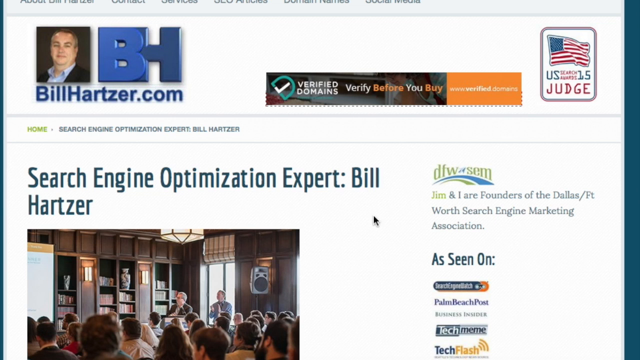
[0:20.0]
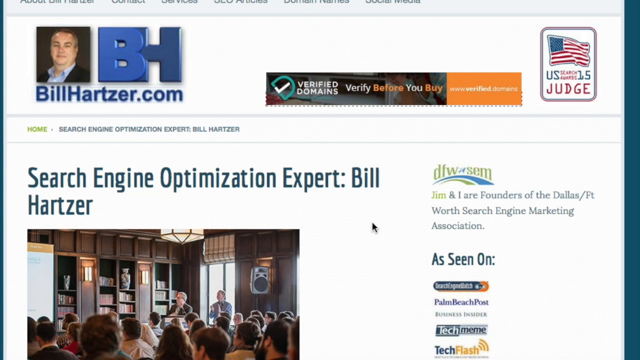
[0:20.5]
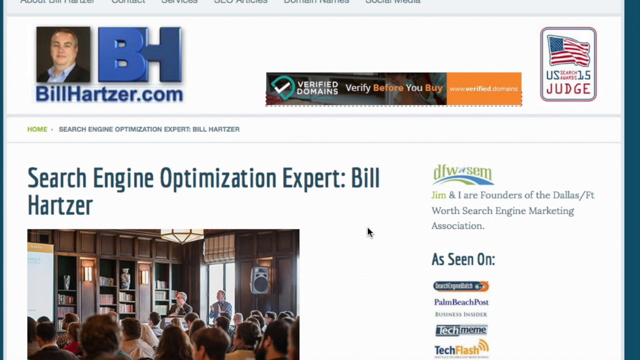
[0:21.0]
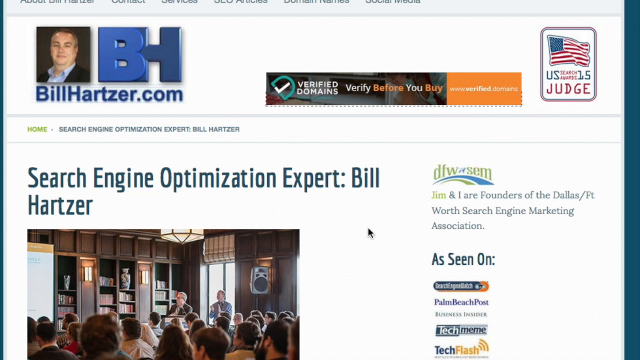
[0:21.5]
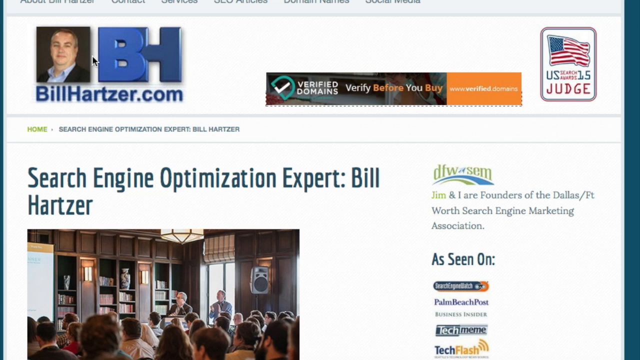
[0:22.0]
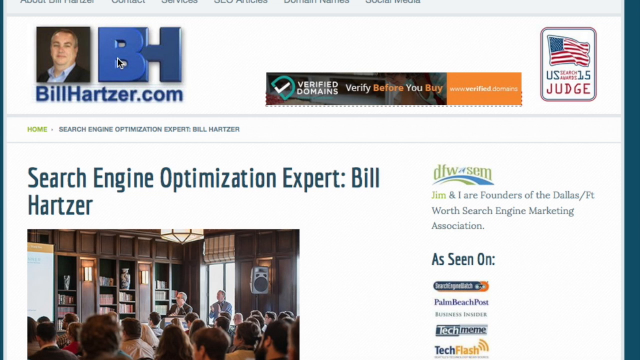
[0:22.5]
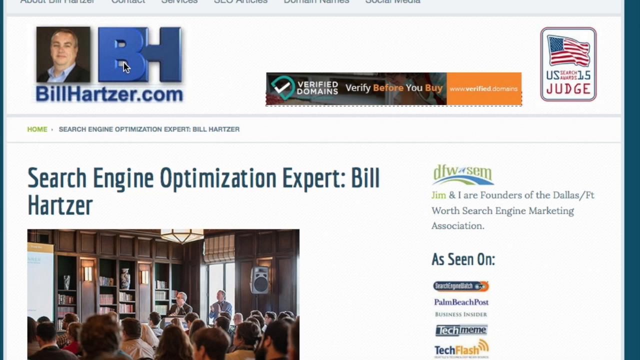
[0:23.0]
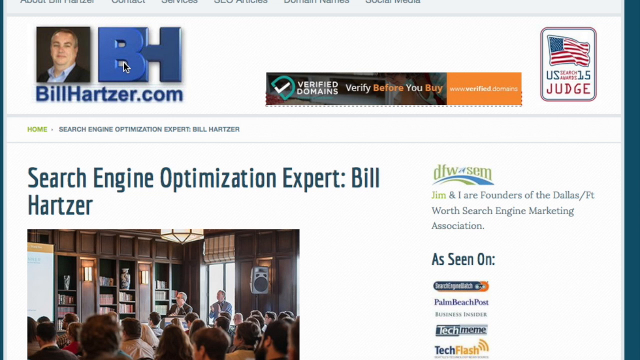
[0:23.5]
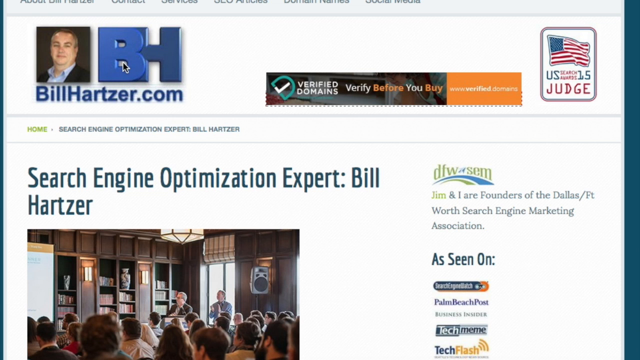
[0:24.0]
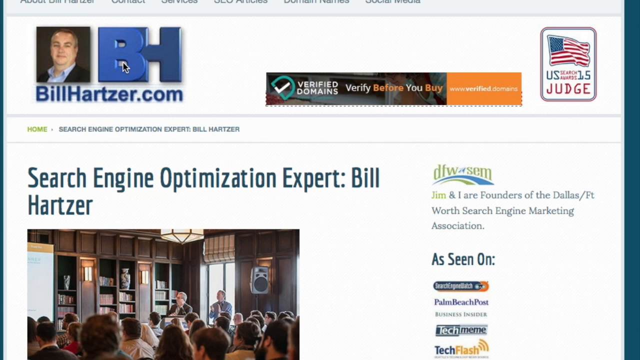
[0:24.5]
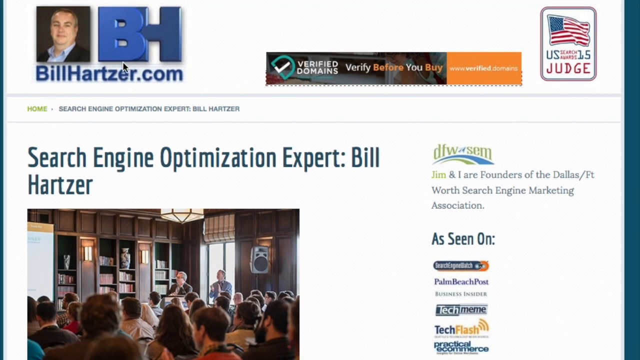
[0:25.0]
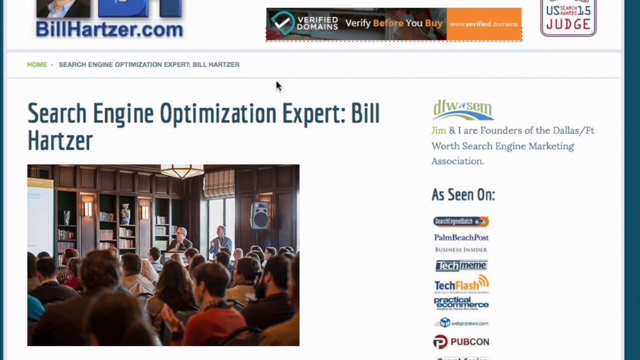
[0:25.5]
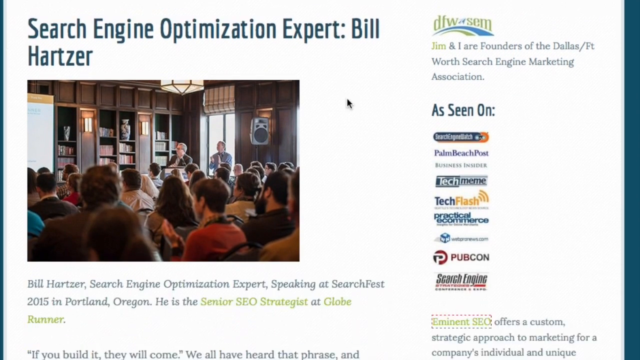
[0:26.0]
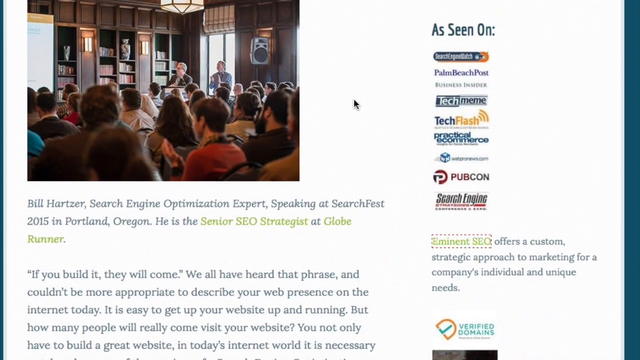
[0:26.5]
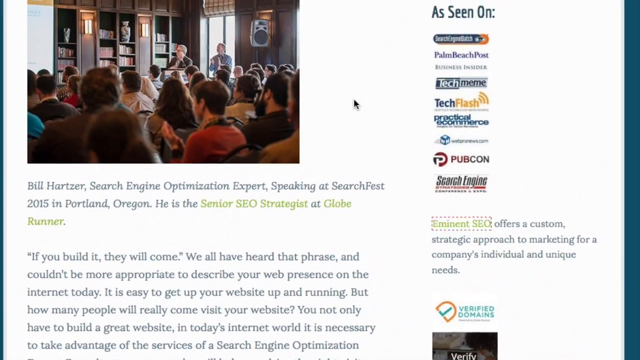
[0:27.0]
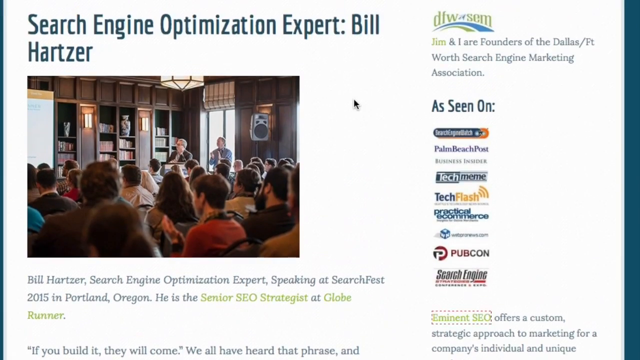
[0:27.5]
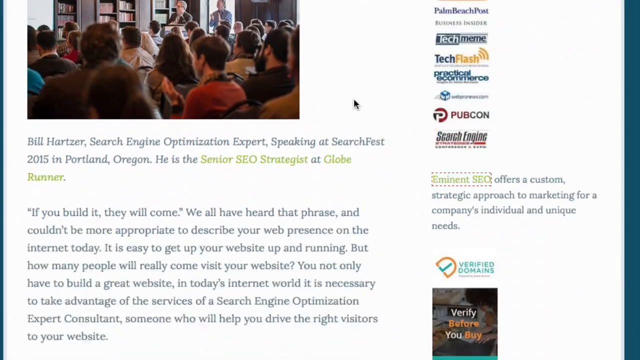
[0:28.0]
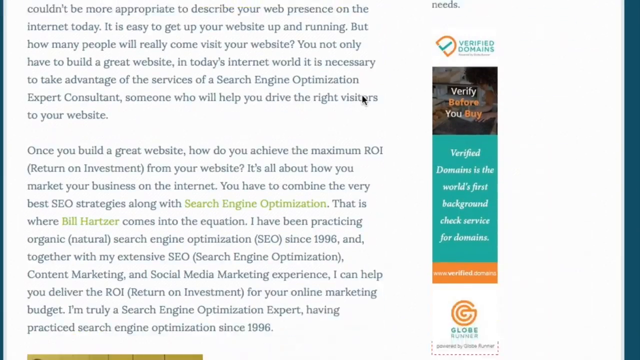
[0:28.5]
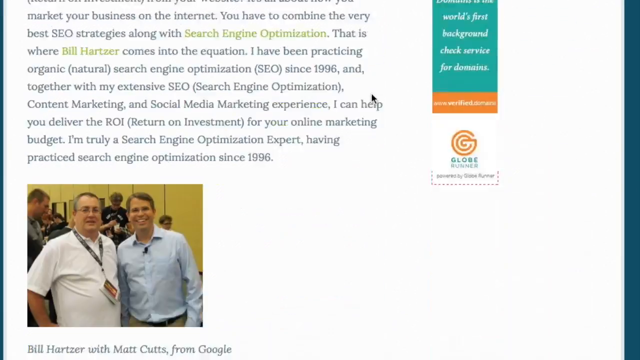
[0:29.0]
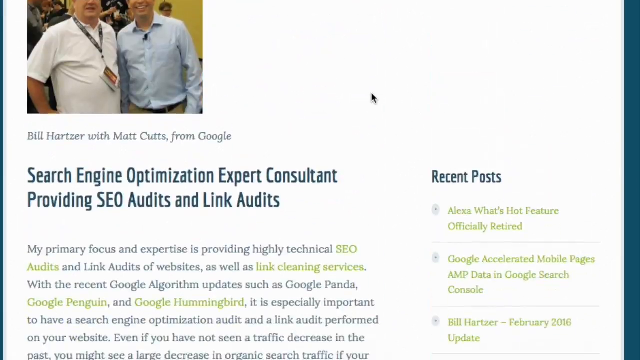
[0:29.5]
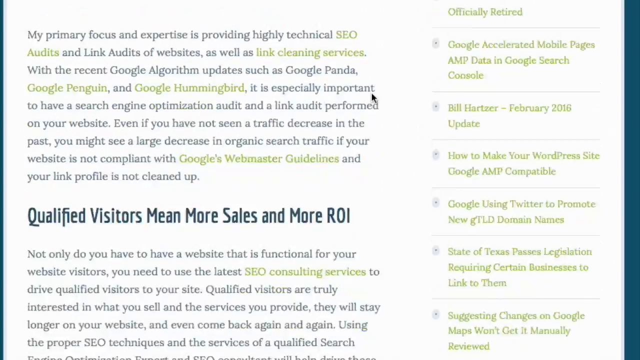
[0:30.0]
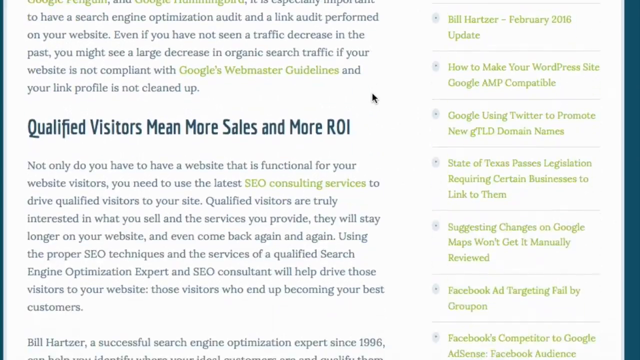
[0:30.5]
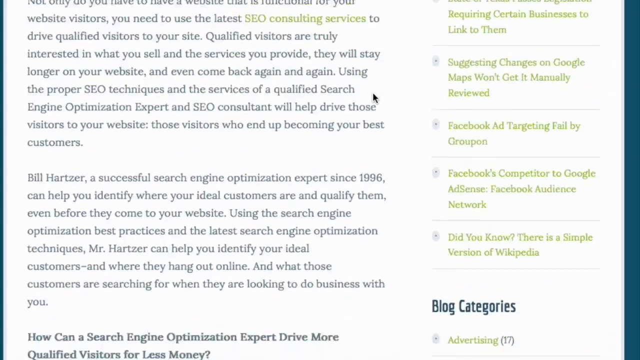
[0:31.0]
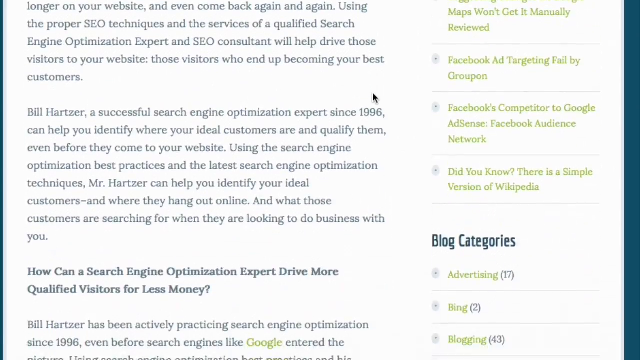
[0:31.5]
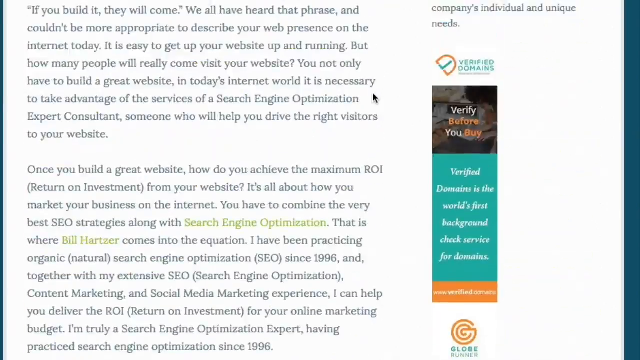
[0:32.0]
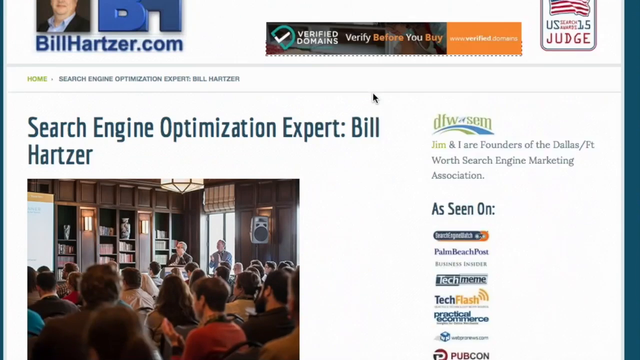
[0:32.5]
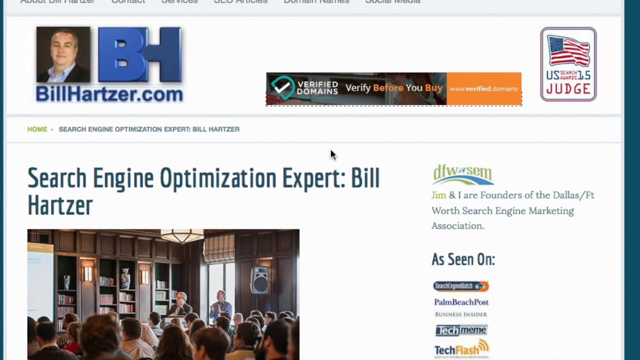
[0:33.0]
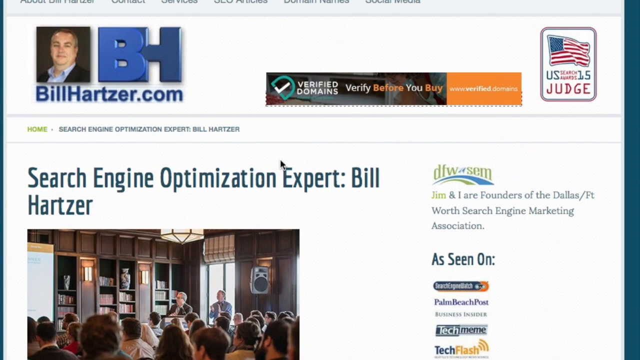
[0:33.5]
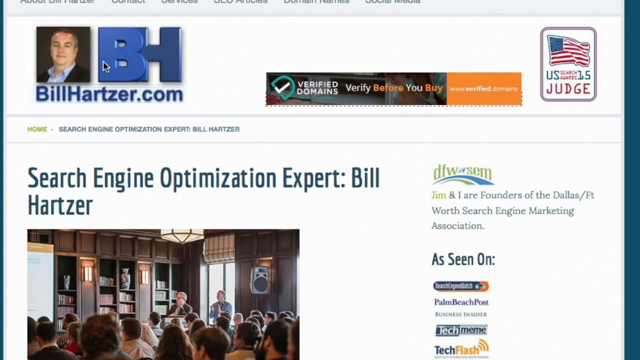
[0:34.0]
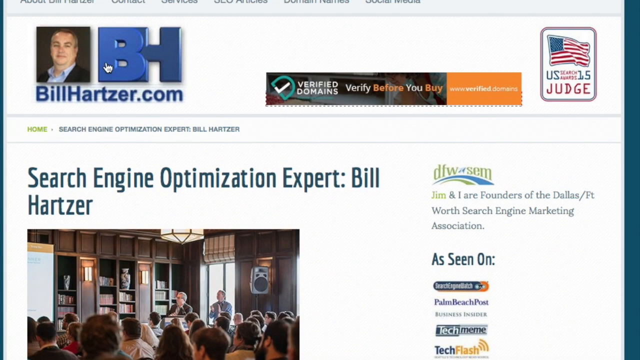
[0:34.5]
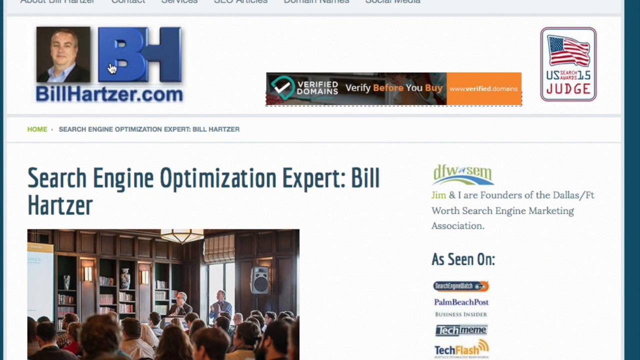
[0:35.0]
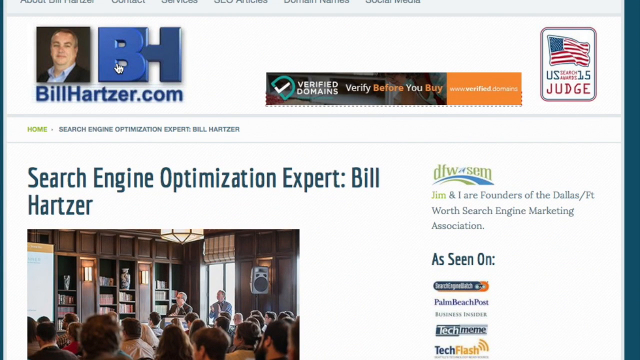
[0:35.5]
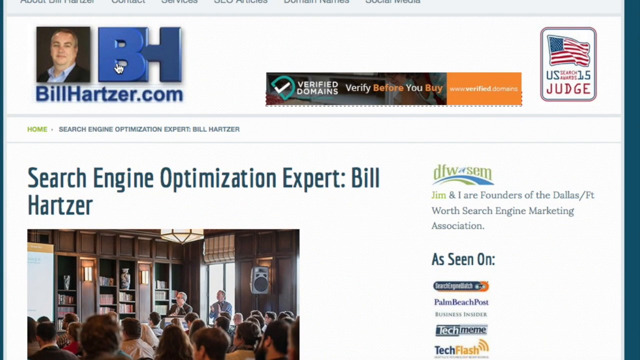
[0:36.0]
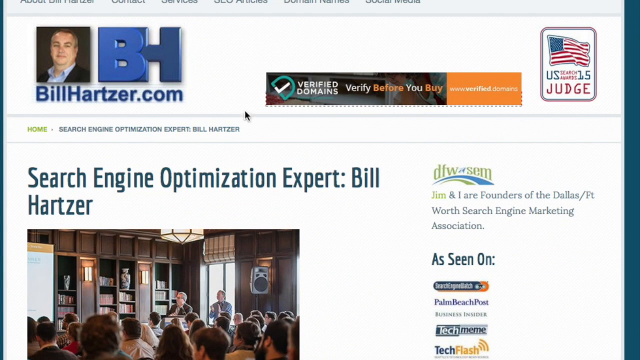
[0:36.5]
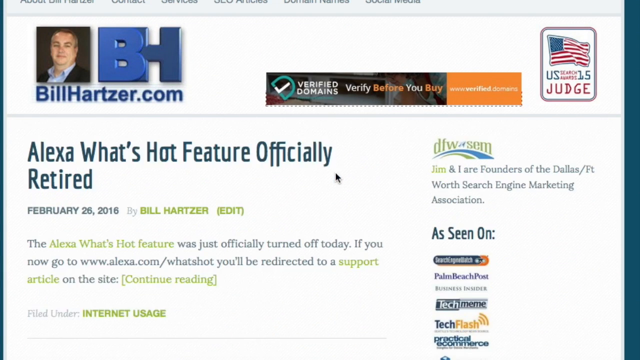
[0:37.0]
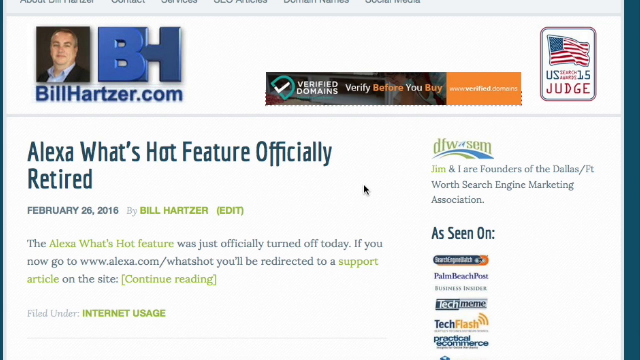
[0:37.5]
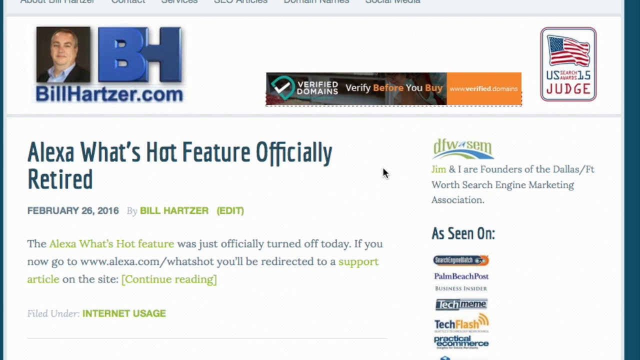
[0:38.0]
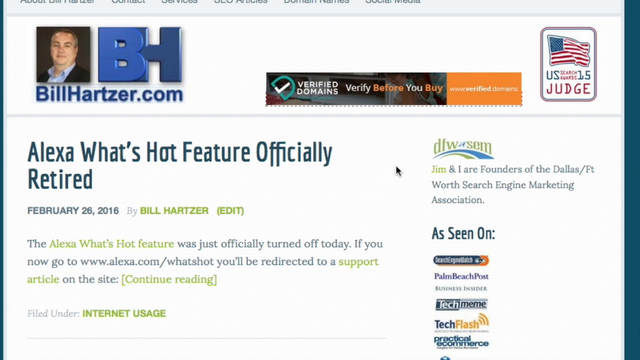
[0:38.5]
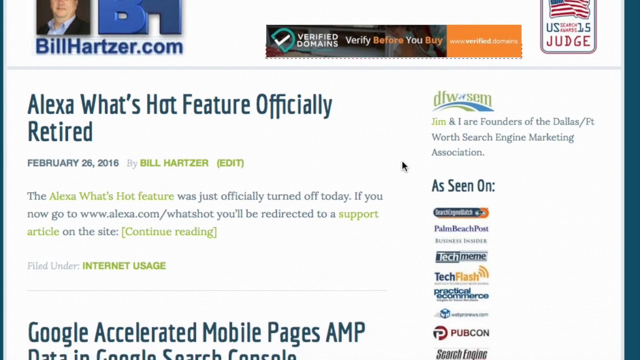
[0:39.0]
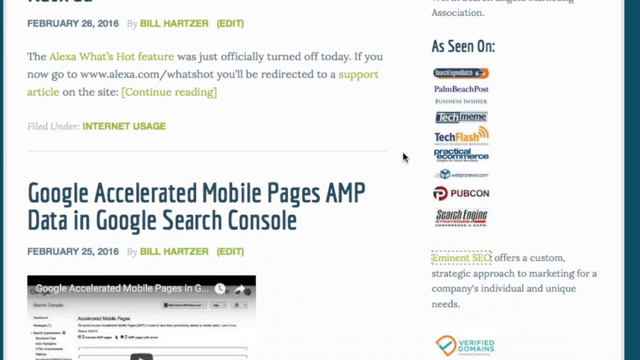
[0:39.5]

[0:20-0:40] The Bill Hartzer website is still shown as a screen share of a computer screen, with the cursor moving around. On the screen is an image of an older gentleman with gray hair; he is very hard to see because he is distant, and he looks like he is speaking to a crowd of people. Underneath, text reads "Bill Hartzer, search engine optimization expert, speaking at Searchfest 2015 in Portland, Oregon" and "He is the senior SEO strategist at GlobeRunner". The page is scrolled back and forth, up and down. The cursor then hovers over the logo, which apparently gets clicked, leading to an article written by Bill Hartzer titled "Alexa, what's hot feature officially retired".